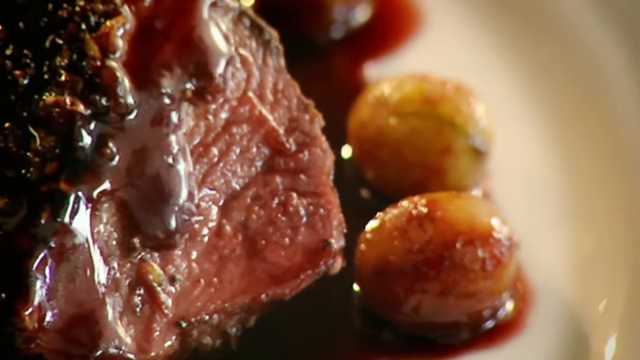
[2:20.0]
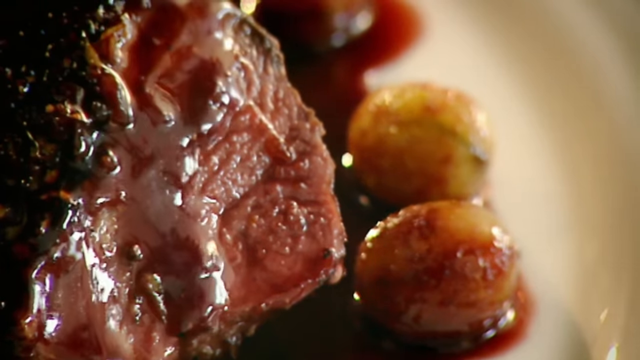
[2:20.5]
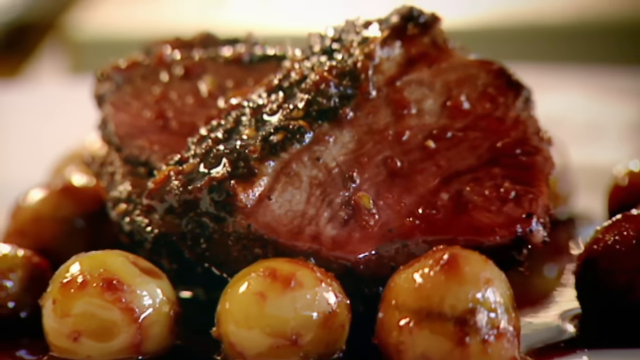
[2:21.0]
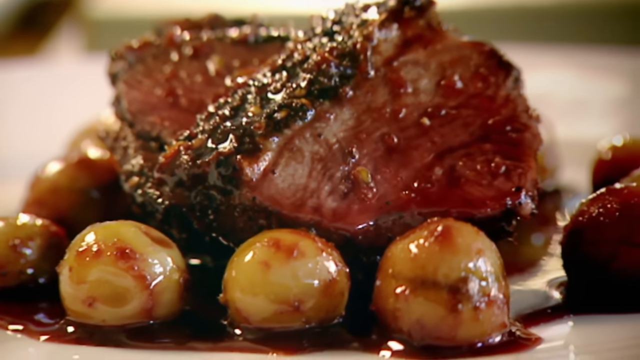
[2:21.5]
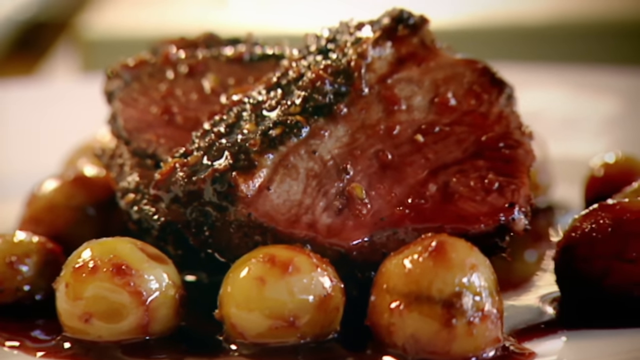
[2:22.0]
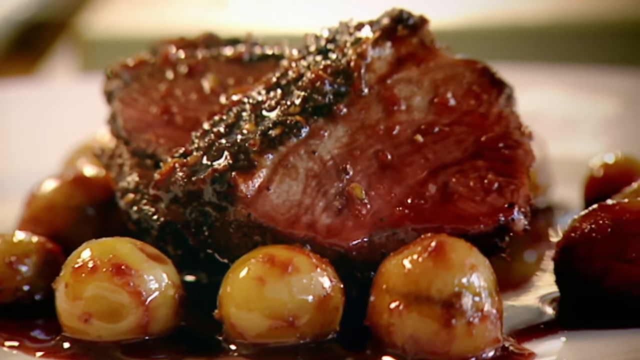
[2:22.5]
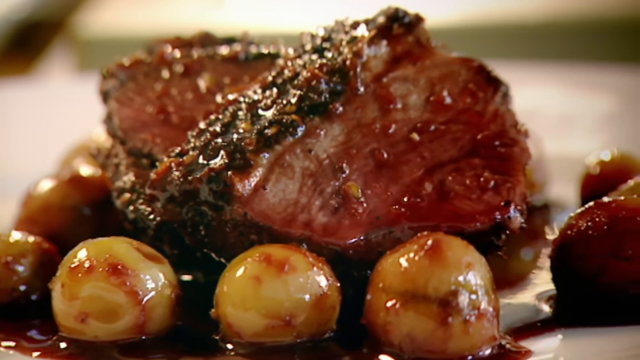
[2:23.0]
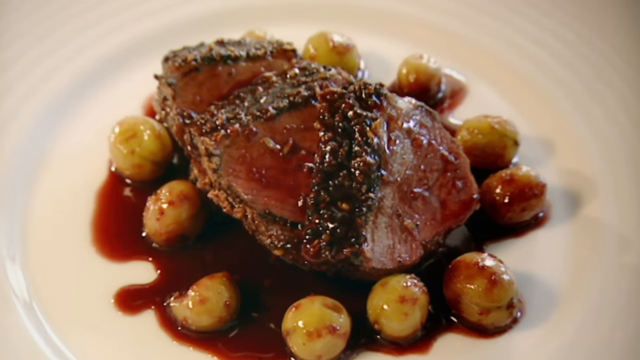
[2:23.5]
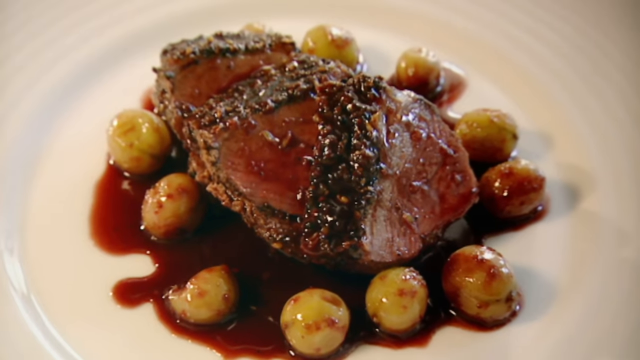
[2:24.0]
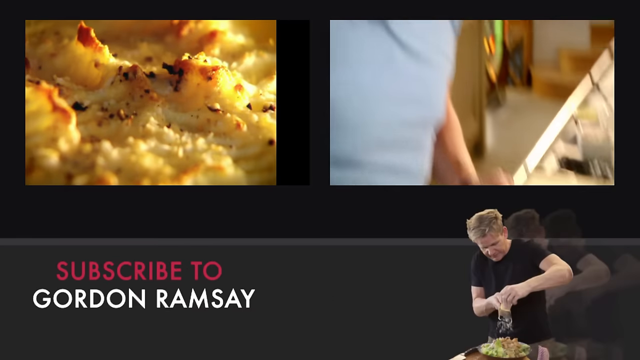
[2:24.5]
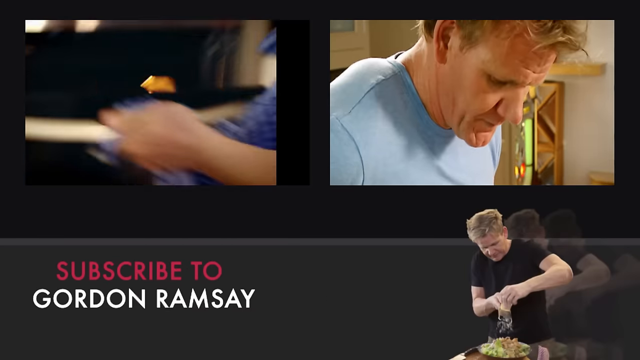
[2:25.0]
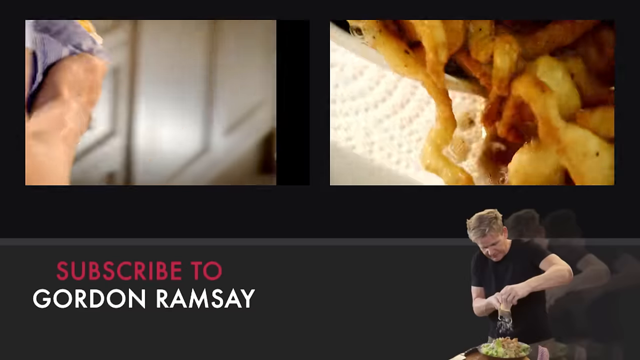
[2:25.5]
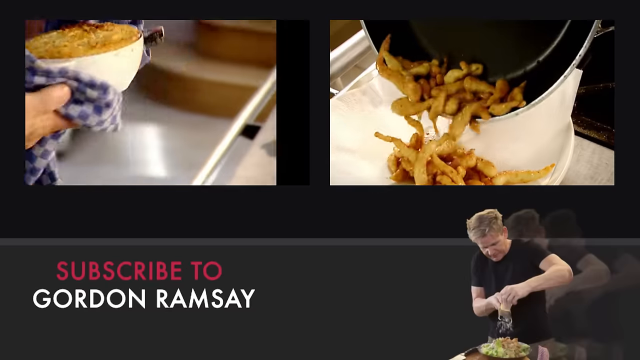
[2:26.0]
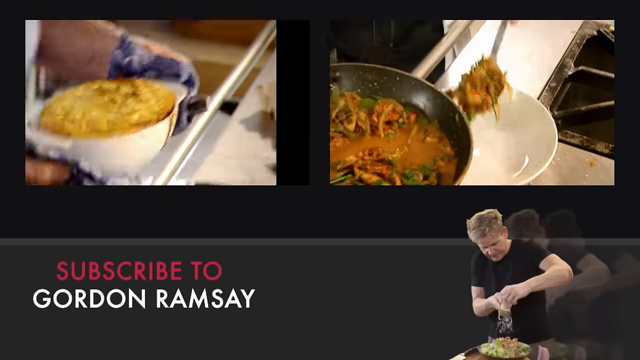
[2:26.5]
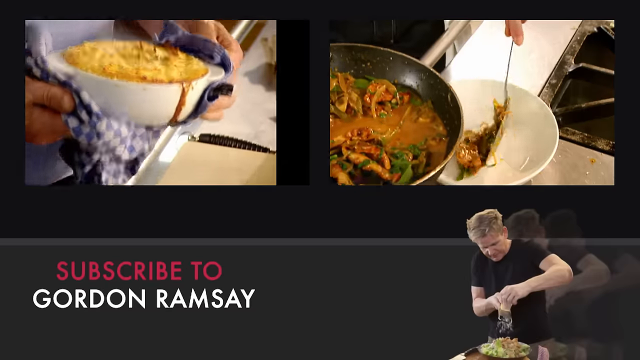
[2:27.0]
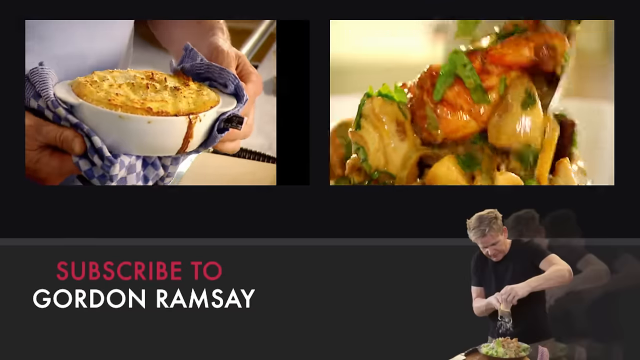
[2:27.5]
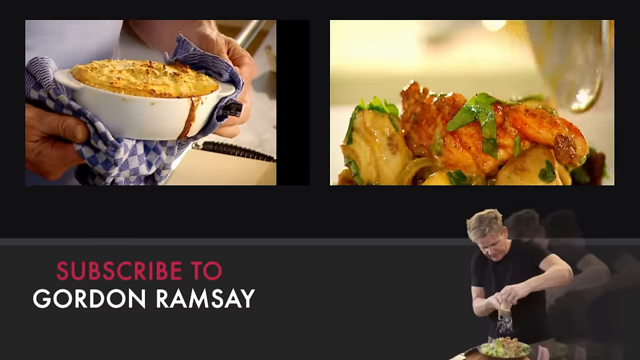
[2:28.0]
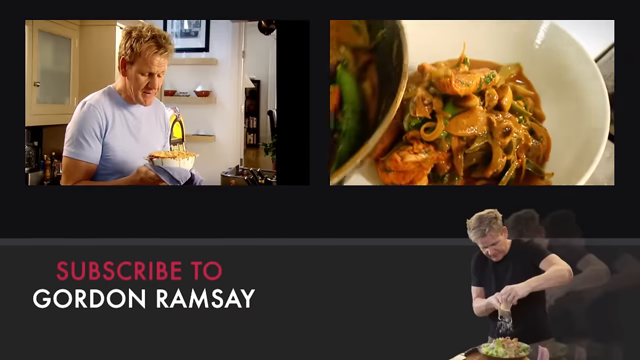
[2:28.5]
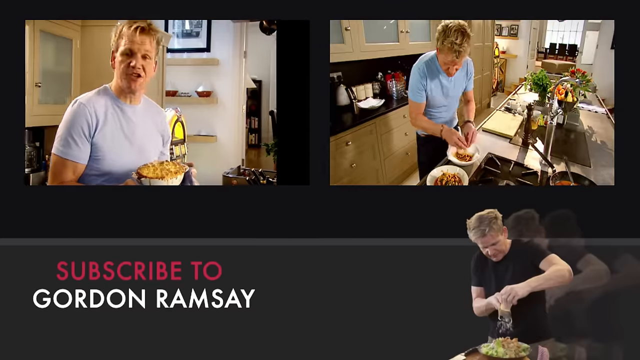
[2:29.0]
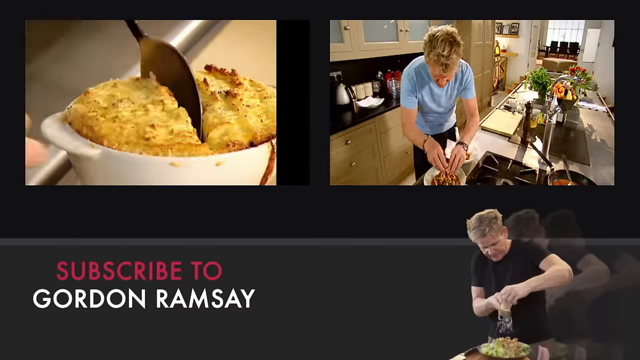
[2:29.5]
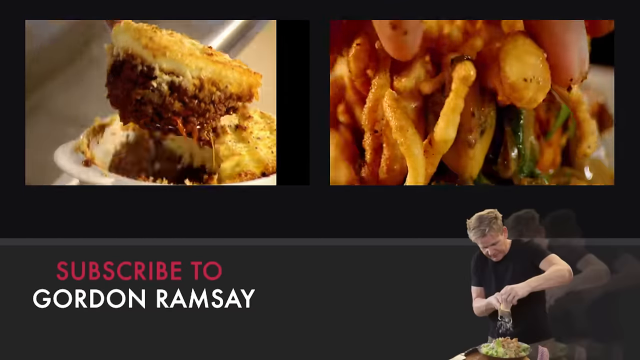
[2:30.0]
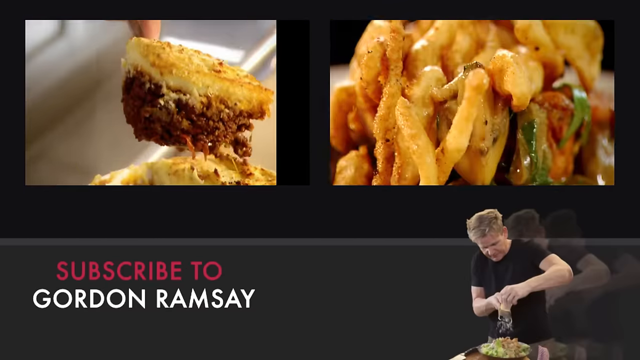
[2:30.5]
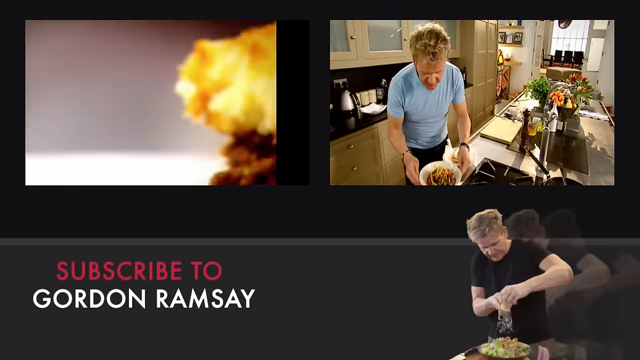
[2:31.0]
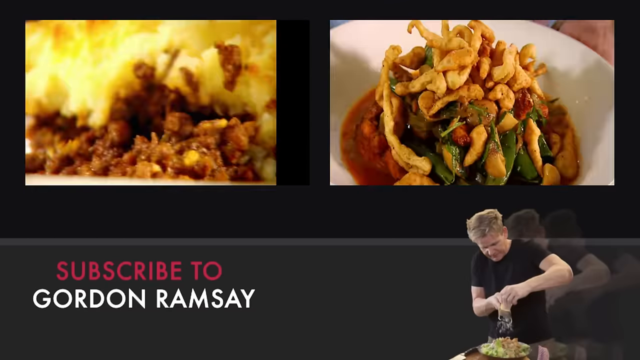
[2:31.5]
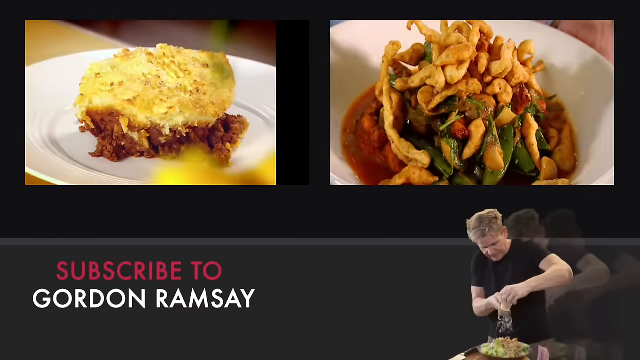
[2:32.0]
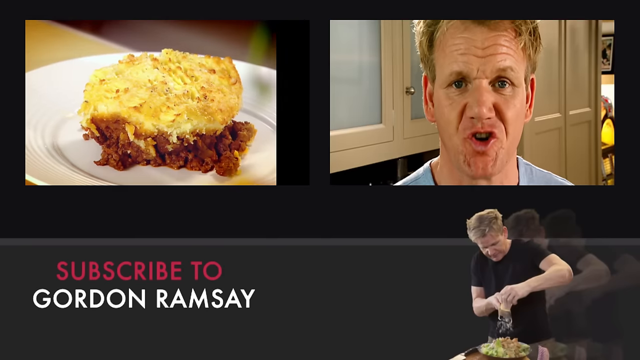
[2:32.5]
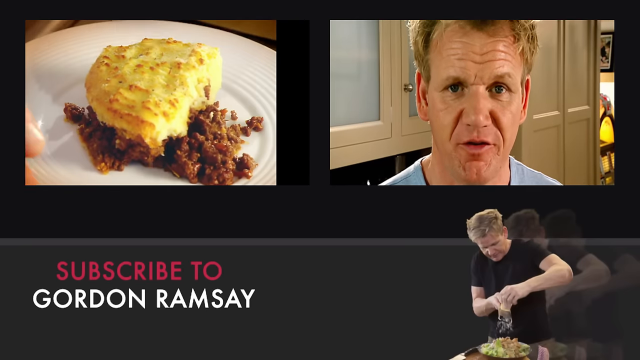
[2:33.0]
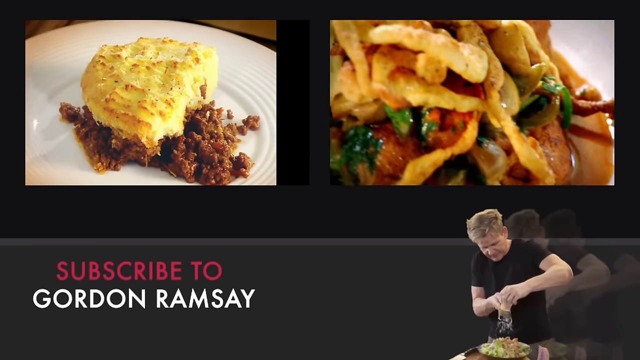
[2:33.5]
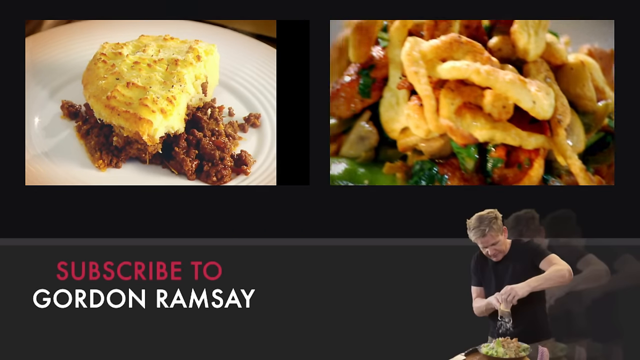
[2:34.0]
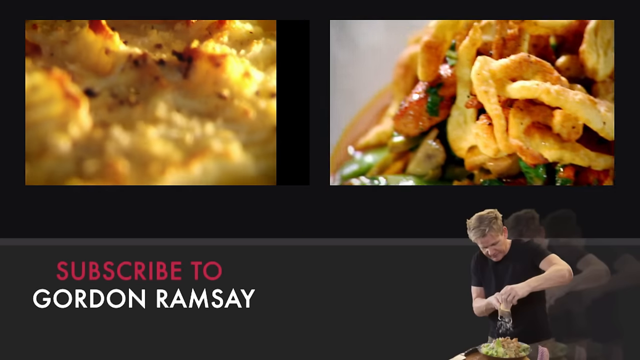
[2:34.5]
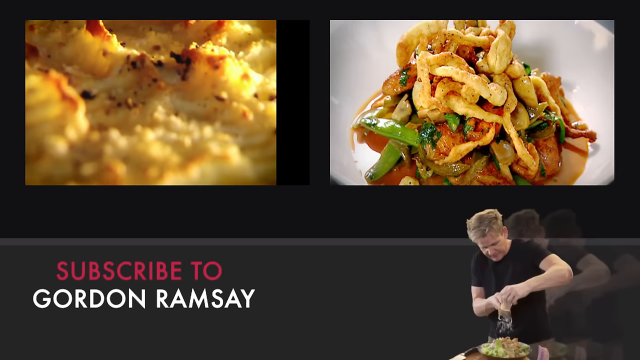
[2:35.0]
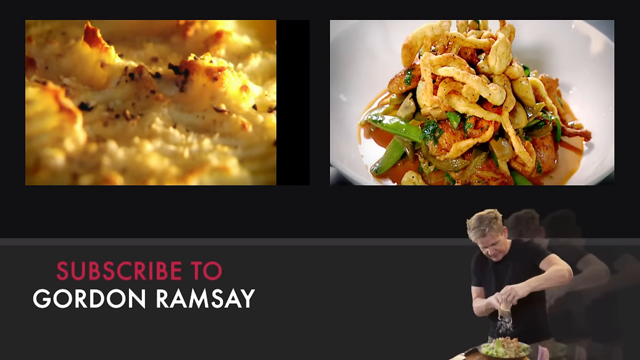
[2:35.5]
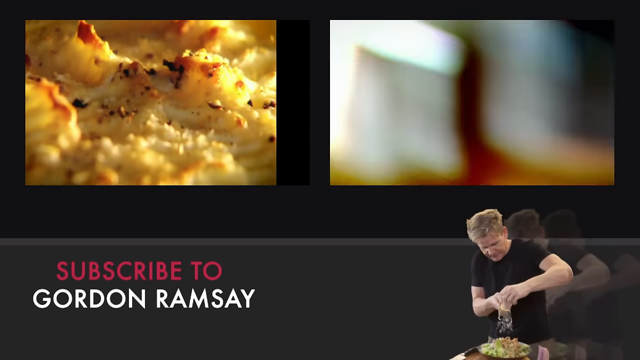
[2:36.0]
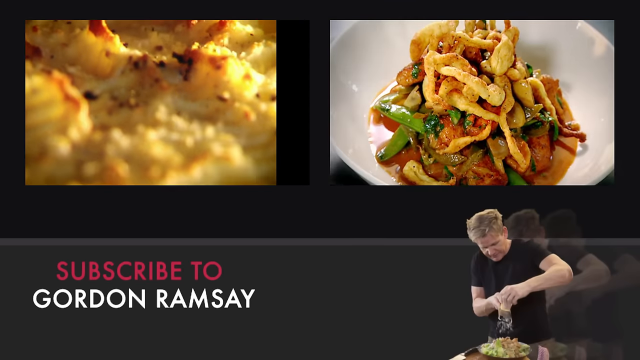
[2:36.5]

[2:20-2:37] The man shows the plates of steak, now covered in the gravy he made with red wine. The steak looks delicious. The video then ends with a split view of different videos, apparently made by the same man, showing different dishes. At the bottom left of the screen is the text "subscribe to Gordon Ramsey", with "subscribe to" in red and "Gordon Ramsey" in white. On the right, the same man who prepared the steak is shown wearing a black t-shirt.